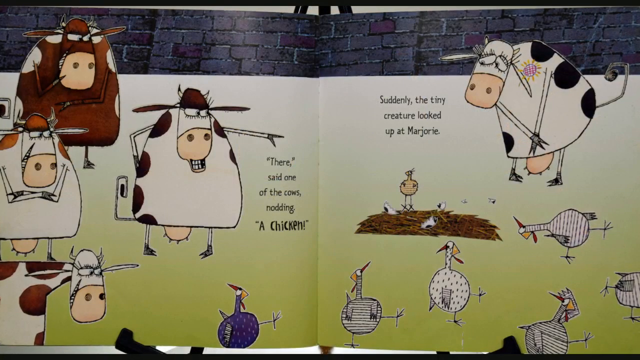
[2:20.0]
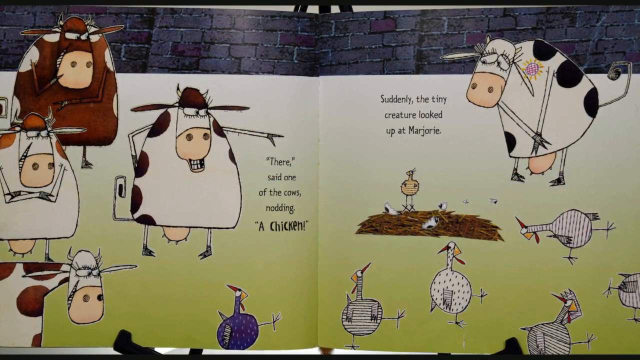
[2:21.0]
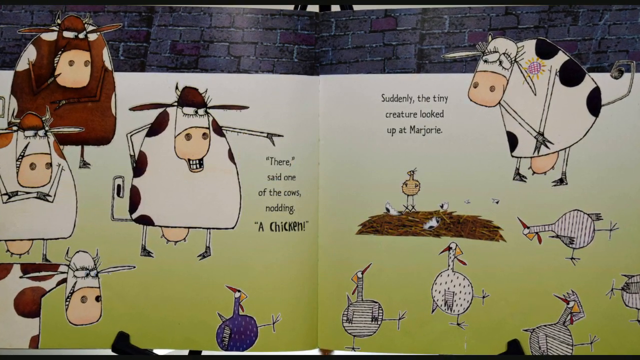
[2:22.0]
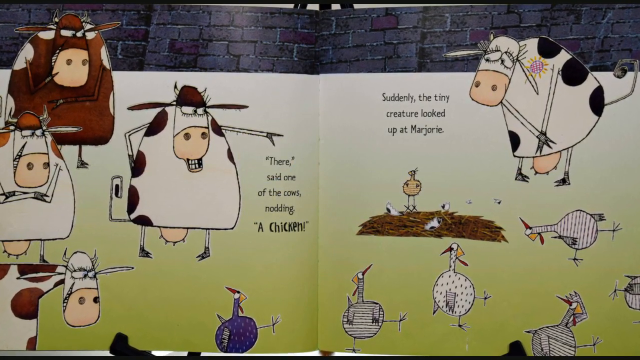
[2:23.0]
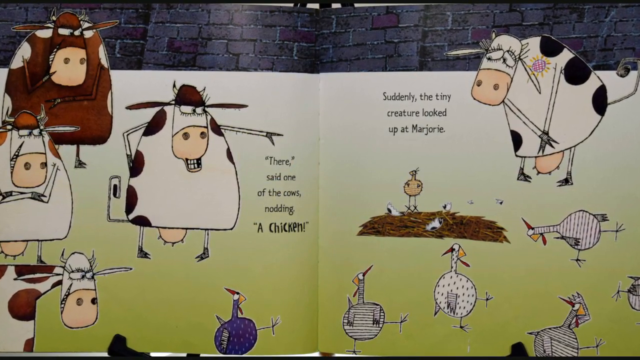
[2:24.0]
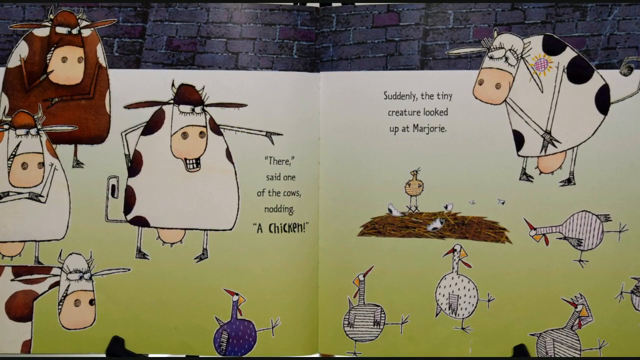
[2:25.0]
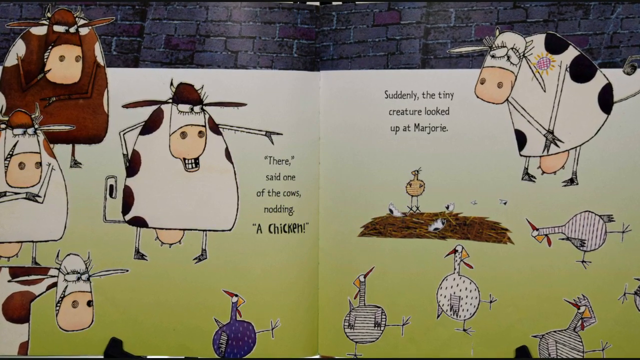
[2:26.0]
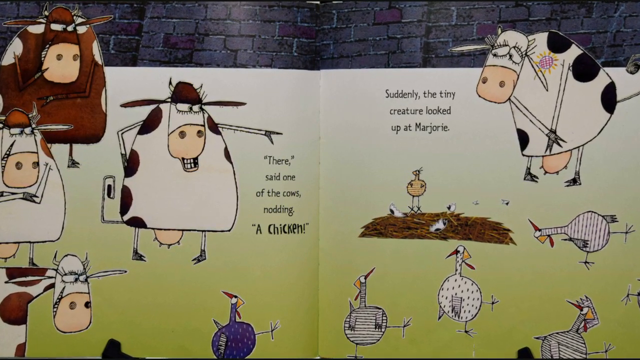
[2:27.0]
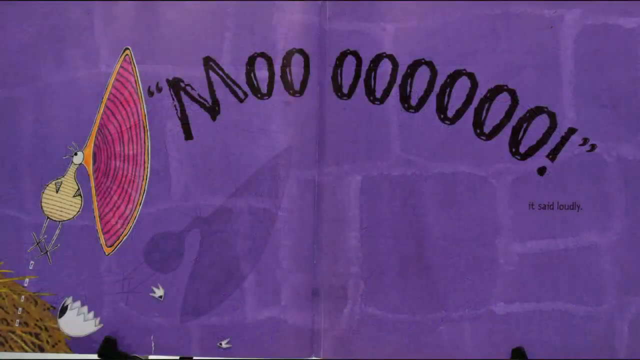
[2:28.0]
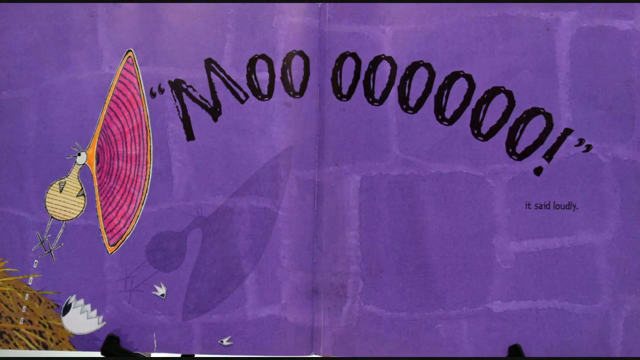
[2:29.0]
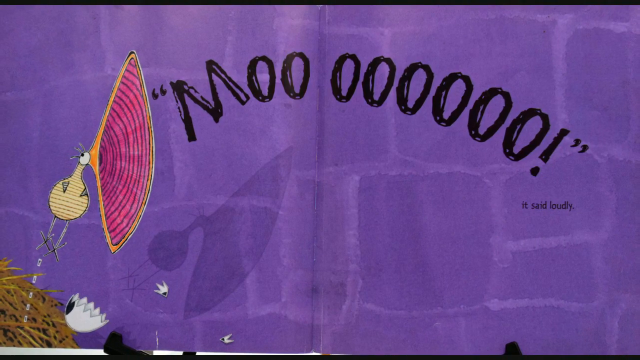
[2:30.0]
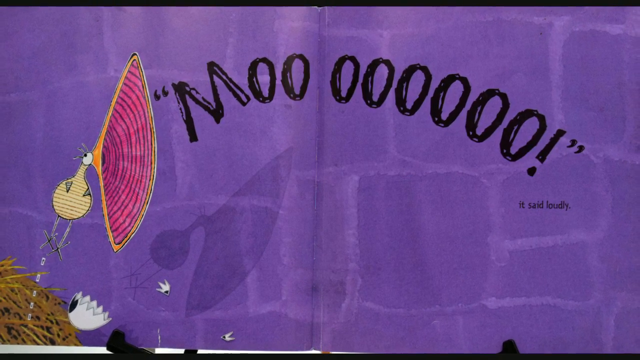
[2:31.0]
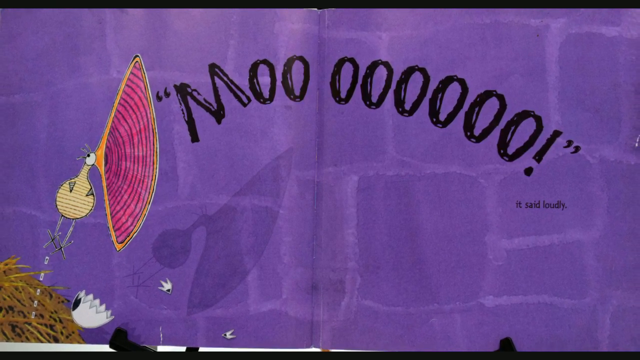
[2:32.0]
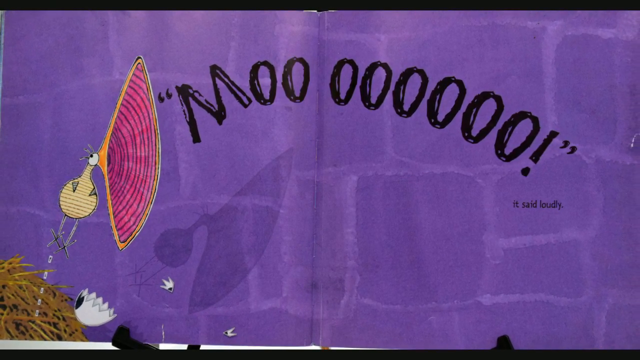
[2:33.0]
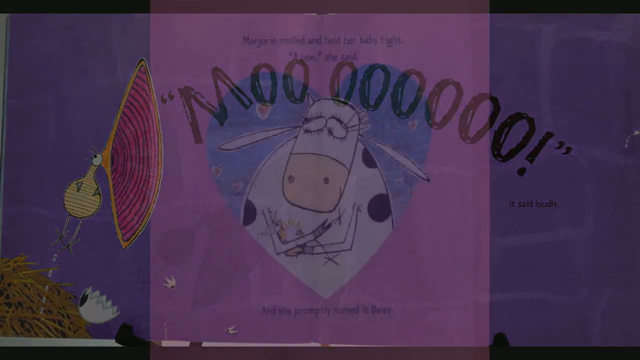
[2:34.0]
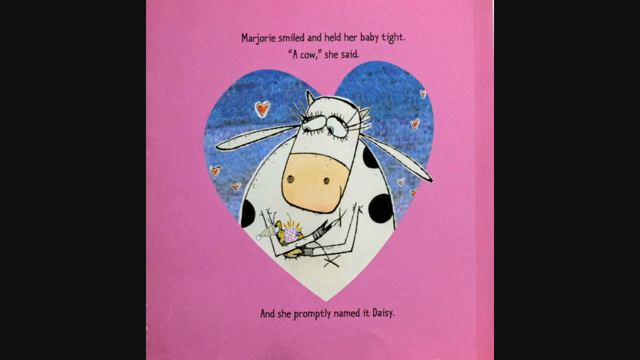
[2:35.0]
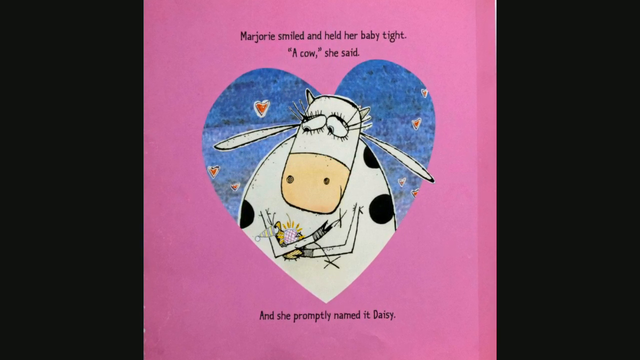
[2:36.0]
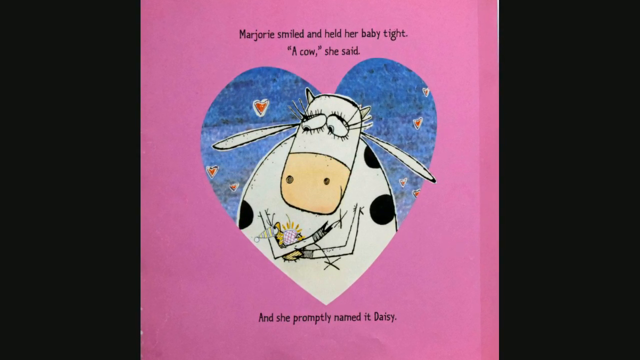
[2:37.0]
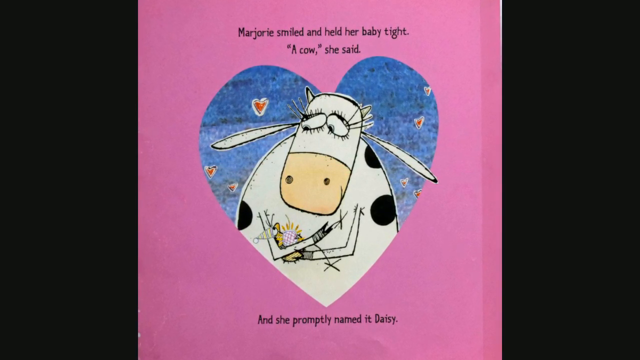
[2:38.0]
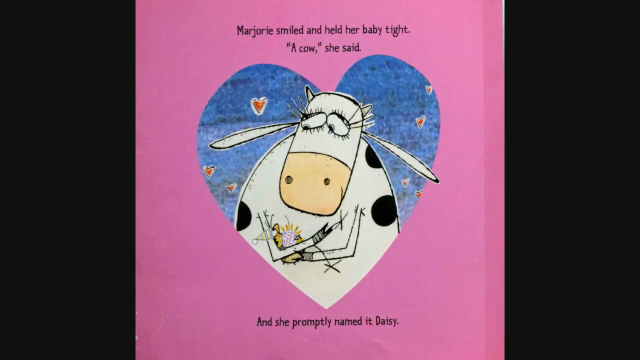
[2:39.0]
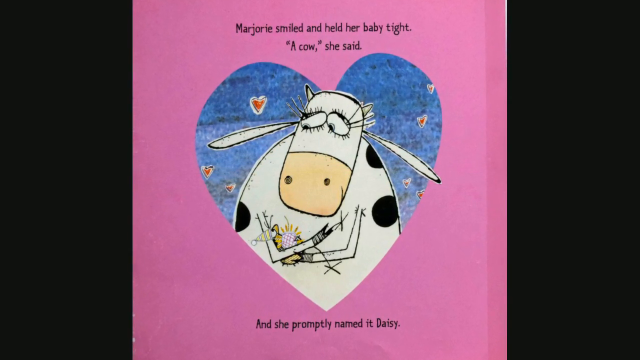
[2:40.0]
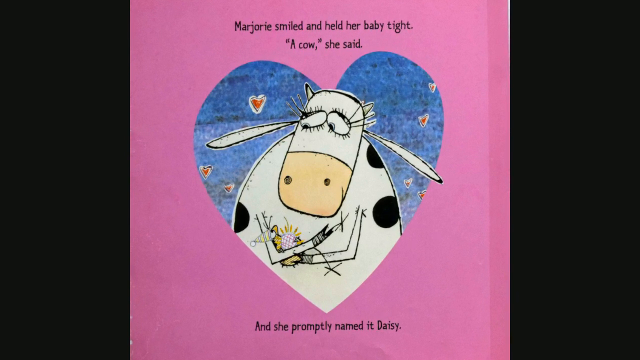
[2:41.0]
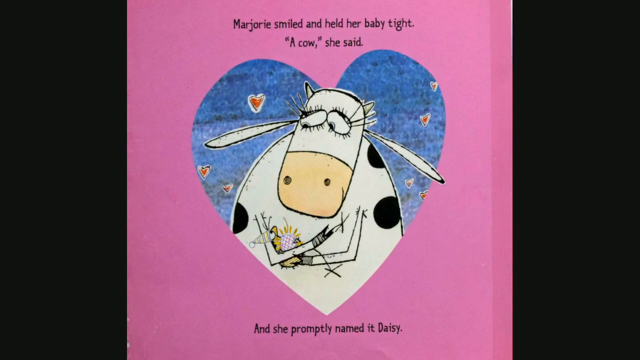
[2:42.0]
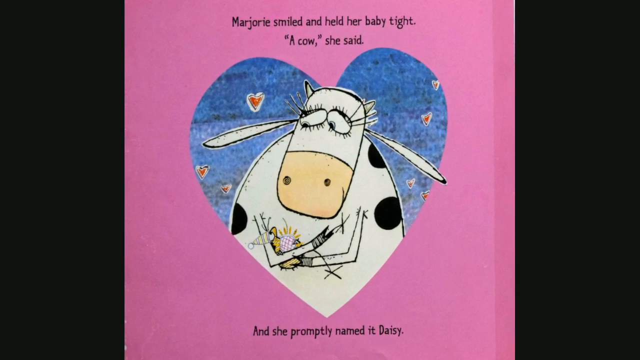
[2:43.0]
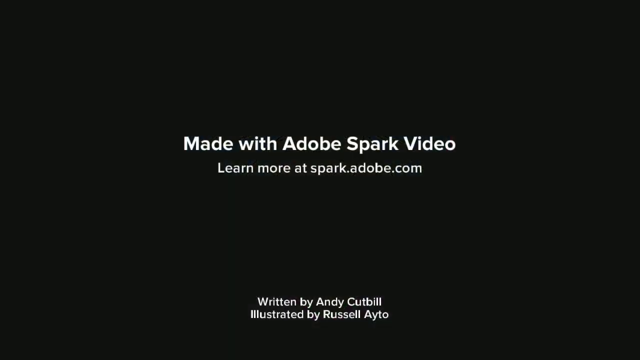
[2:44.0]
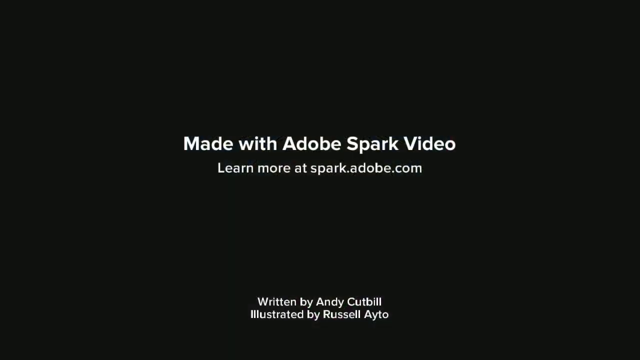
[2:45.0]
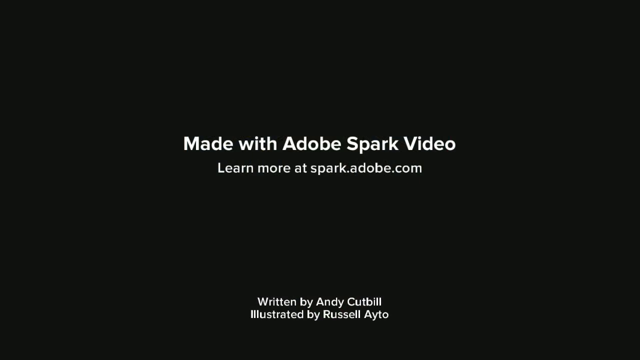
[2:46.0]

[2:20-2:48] In the final part of the book, four cows watch and point at Marjorie, and the text reads "There," said one of the cows nodding, "a chicken." The tiny creature looks up at Marjorie while all the chickens wait to see what will happen, and Marjorie has her arms kind of crossed over her middle. On the last page the little chicken opens its mouth extremely wide, with the text "Moo, it said loudly." Then the text reads "Marjorie smiled and held her baby tight. A cow, she said," and a heart surrounds Marjorie as she hugs and holds the little chicken. Closing text says the video was made with Adobe Spark Video, that more can be learned at "sparkadobe.com," and that the book was written by Andy Cutbill and illustrated by Russell Ito.